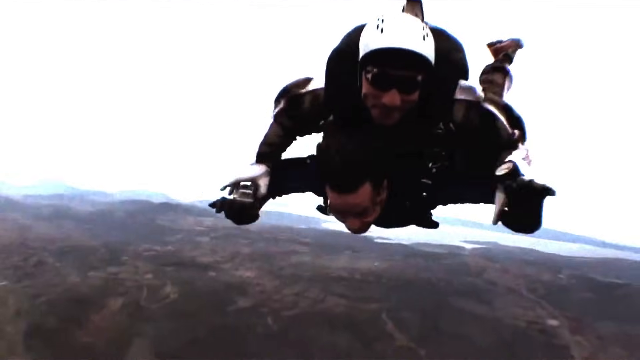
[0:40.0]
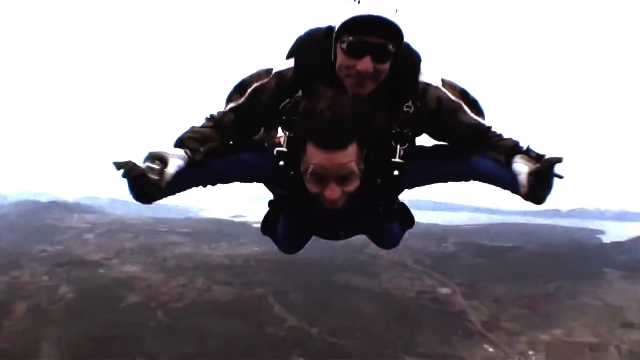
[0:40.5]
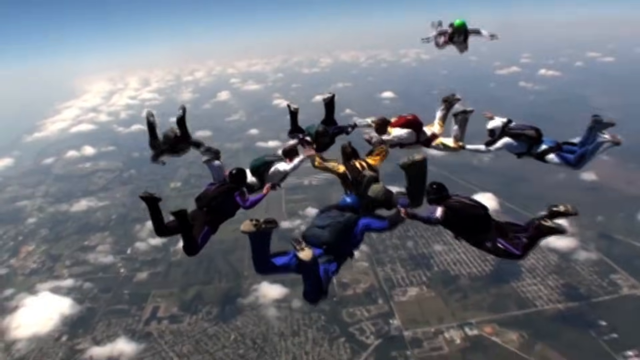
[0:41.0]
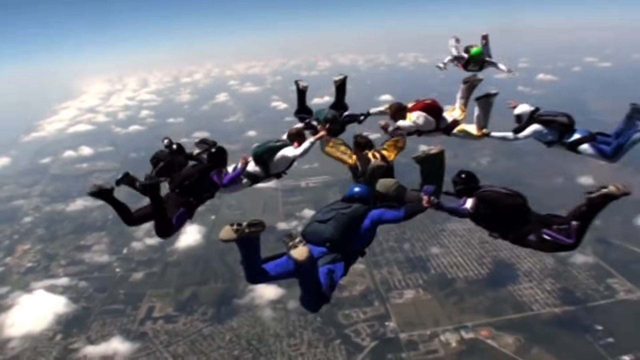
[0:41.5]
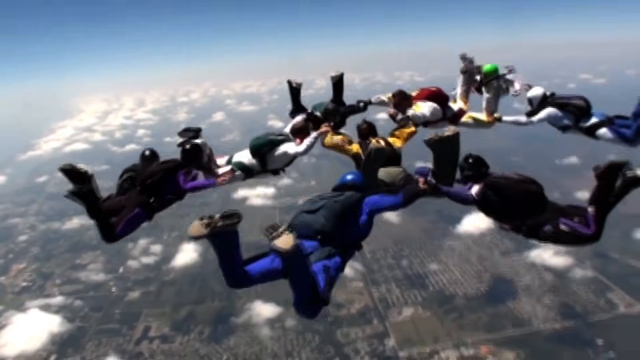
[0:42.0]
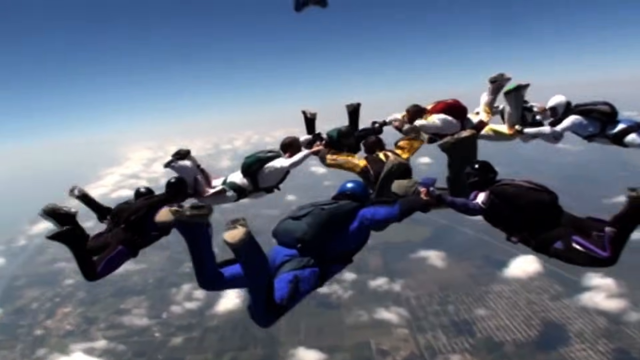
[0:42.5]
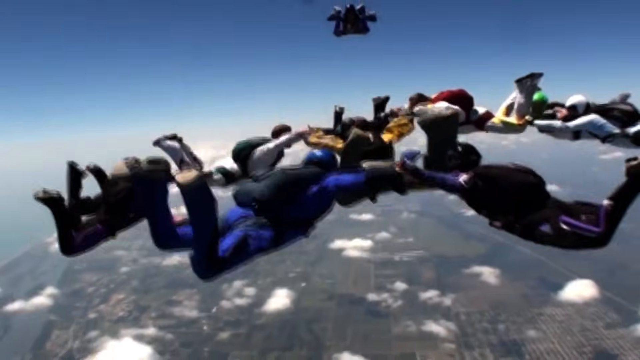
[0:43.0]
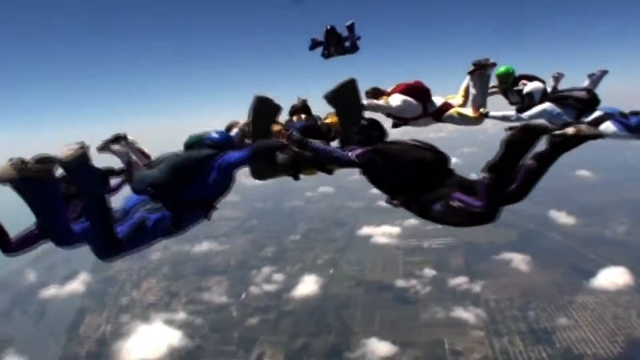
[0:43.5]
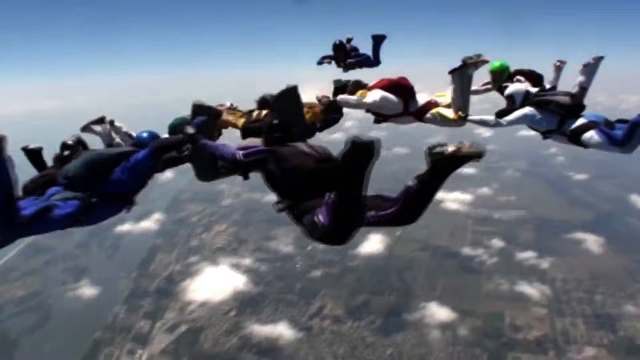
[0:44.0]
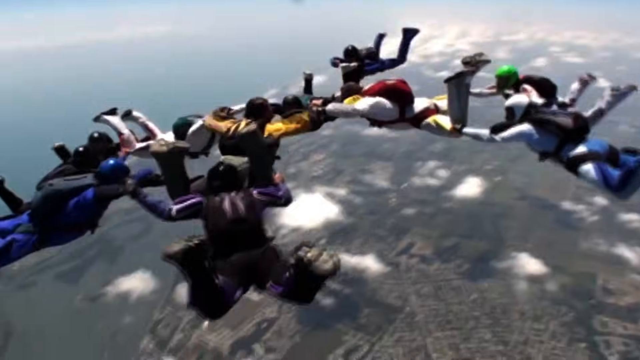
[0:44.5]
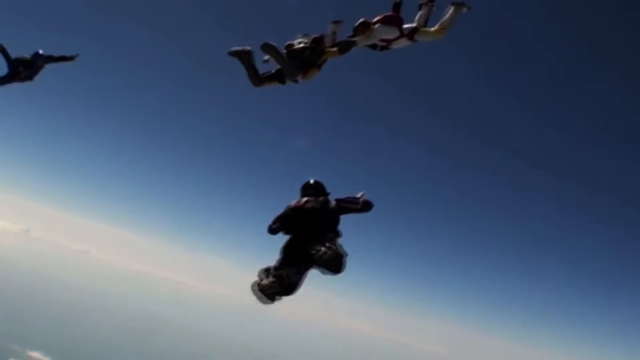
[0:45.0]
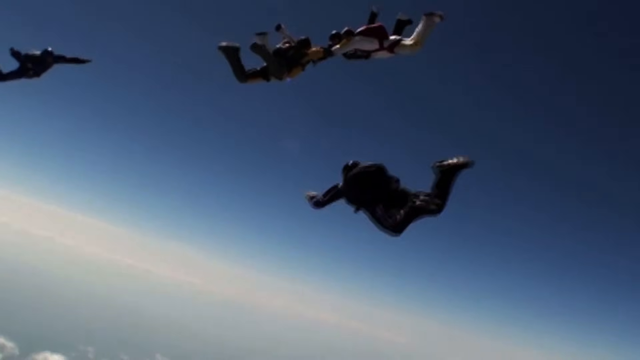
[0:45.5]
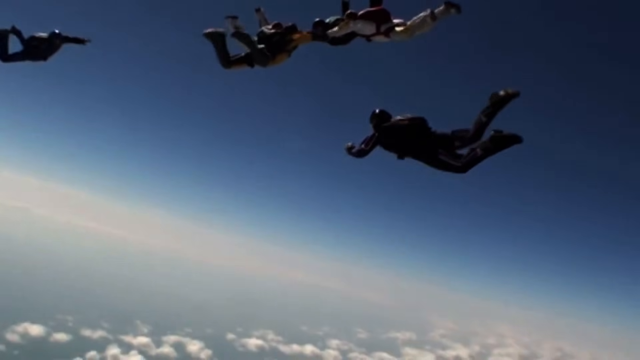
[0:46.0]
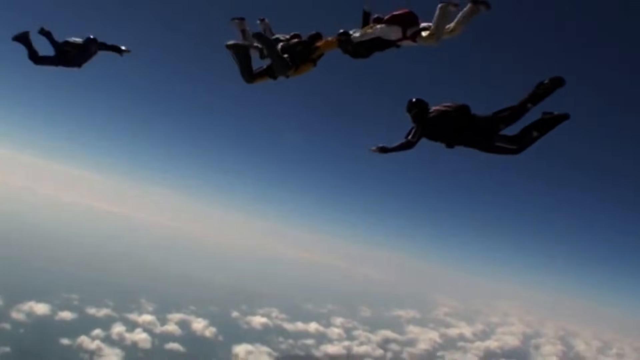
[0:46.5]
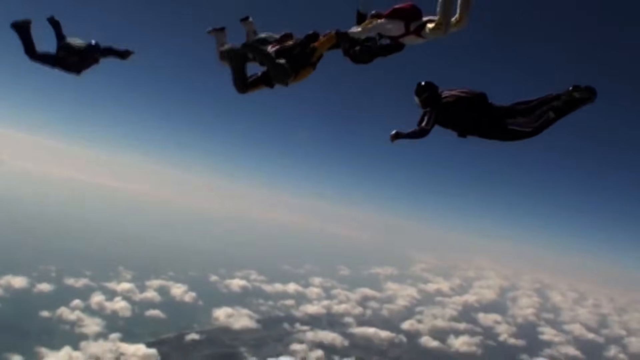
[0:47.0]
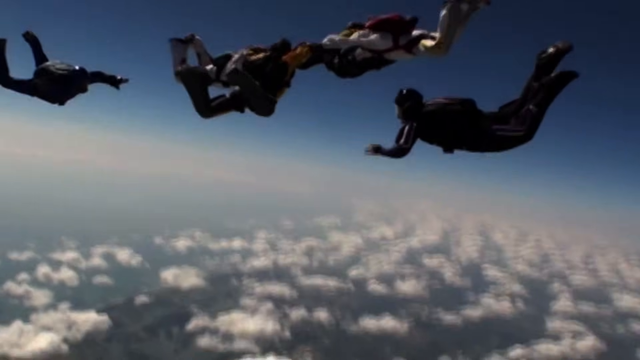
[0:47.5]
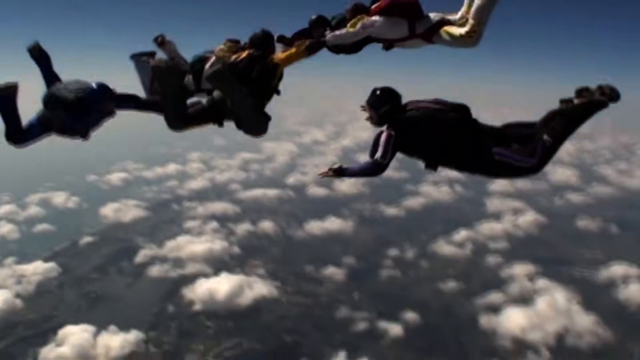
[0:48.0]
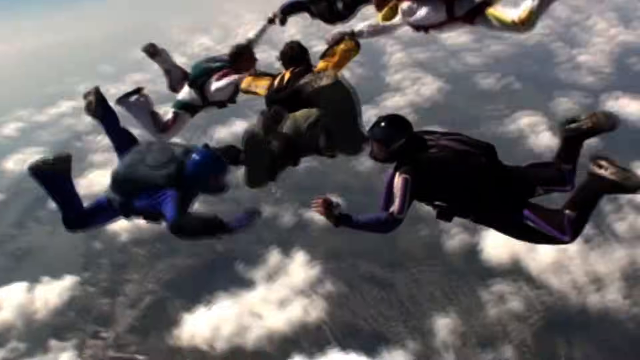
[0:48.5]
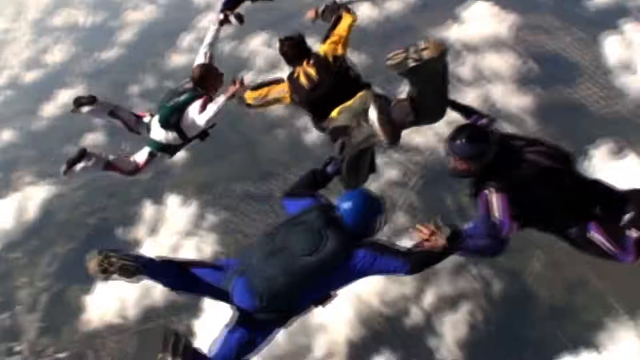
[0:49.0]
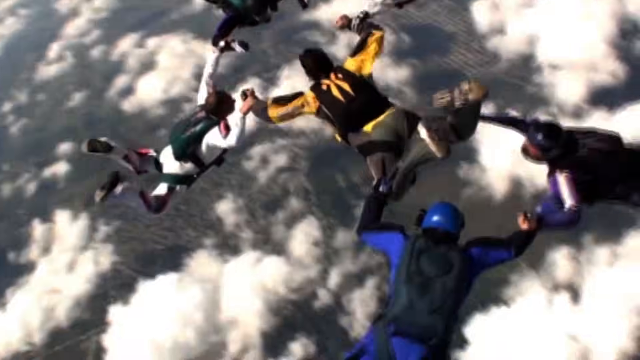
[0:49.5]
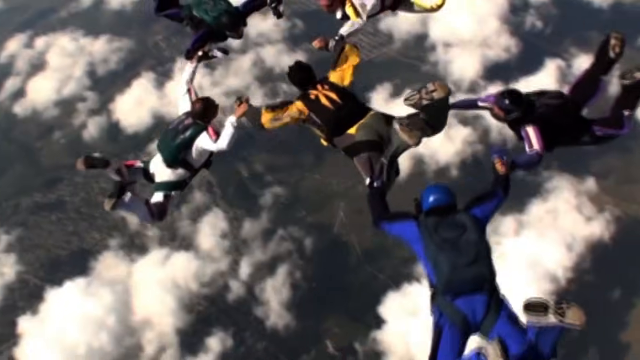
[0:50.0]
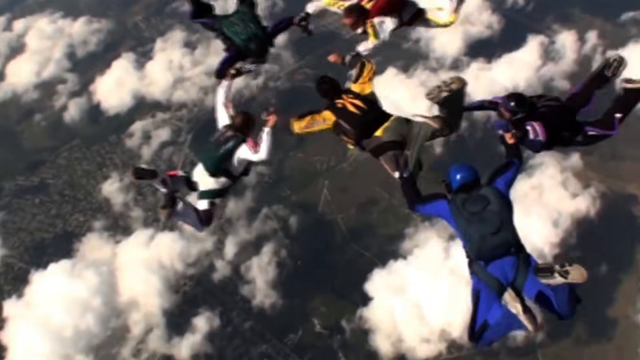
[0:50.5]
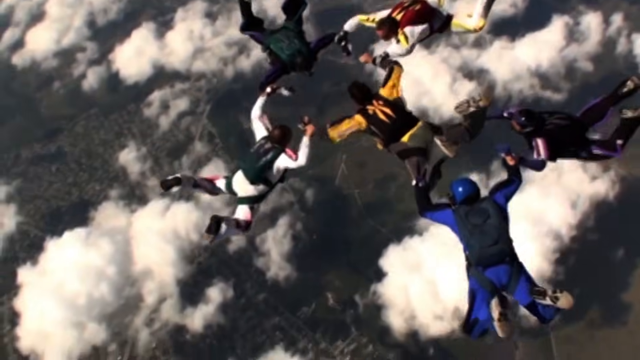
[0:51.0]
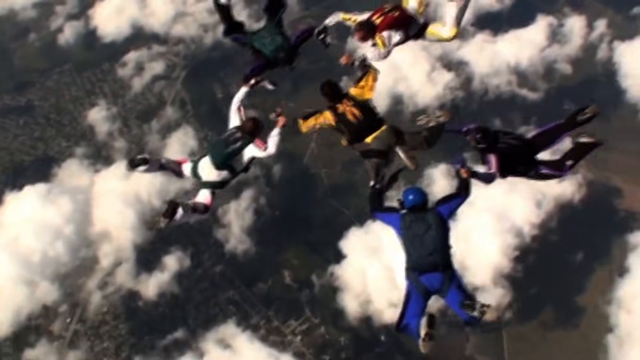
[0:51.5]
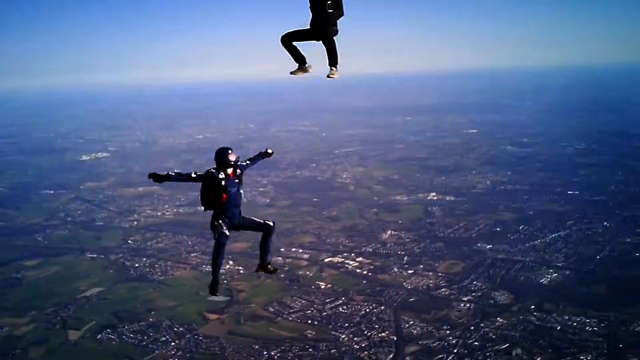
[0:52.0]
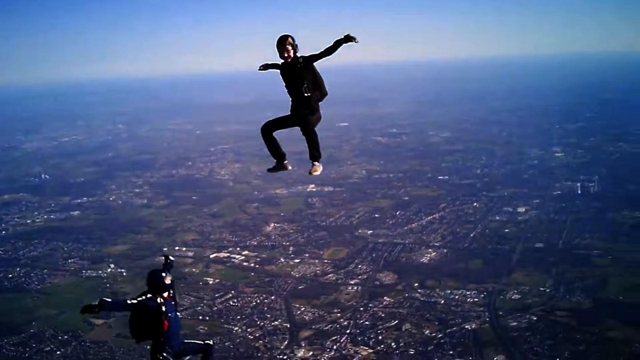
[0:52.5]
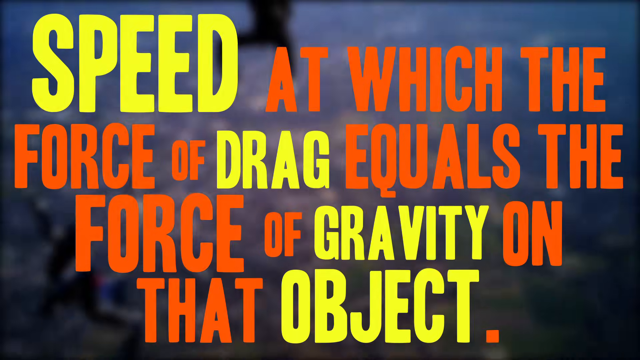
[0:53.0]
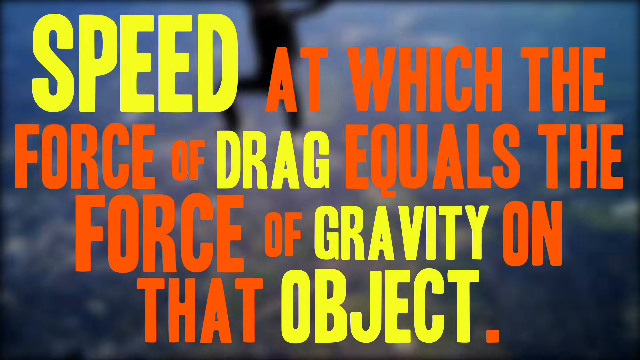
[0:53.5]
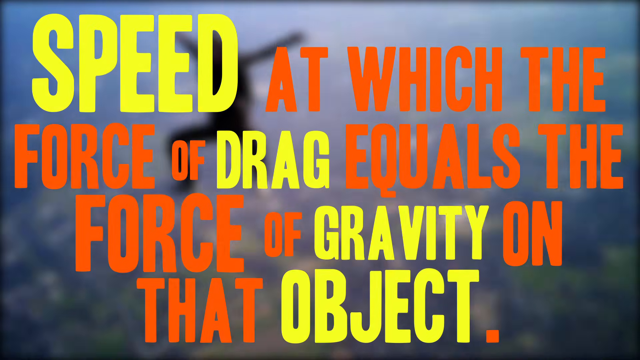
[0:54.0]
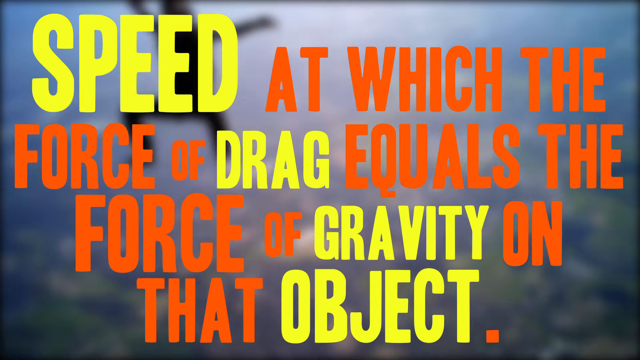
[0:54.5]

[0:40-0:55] Footage of people skydiving is filmed as though from the perspective of a skydiver above the others. An inner group of four skydivers face each other with locked hands, and on three of those four, an additional skydiver has grabbed onto each of their legs, creating a spread-out pattern of linked skydivers. The view then follows one of the people flying in to grab on, seemingly from underneath them, moving upward to reach them and grabbing on to form the pattern in the sky. Next comes an image that is largely background scenery with two people falling vertically, feet first toward the ground rather than diving, as yellow and orange text appears on screen: "speed at which the force of drag equals the force of gravity on that object."